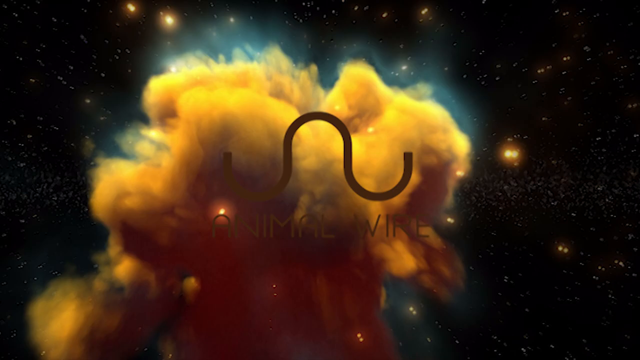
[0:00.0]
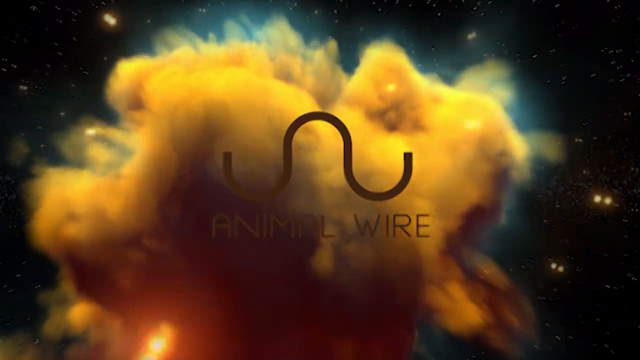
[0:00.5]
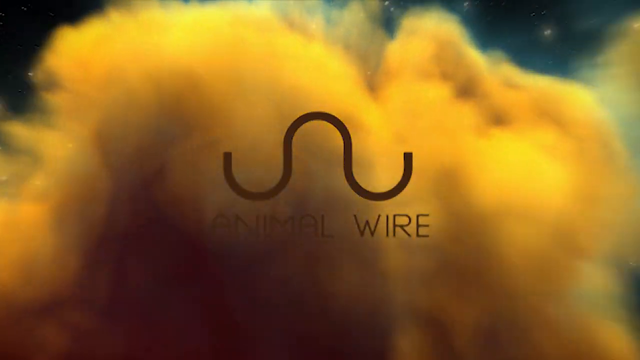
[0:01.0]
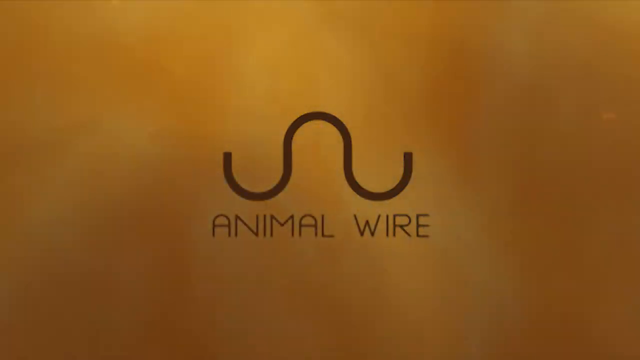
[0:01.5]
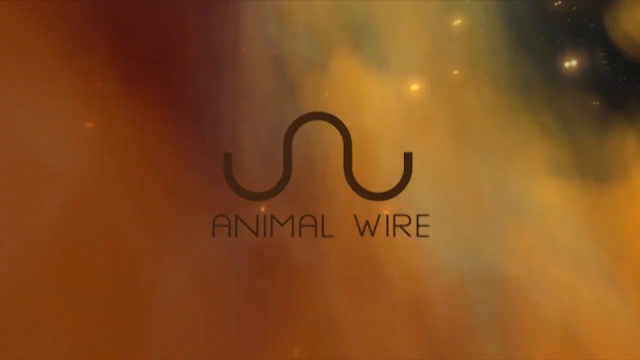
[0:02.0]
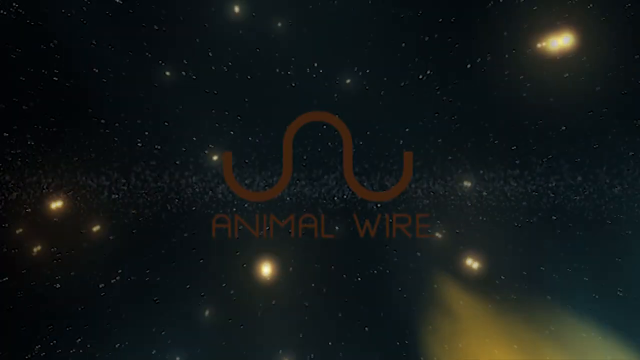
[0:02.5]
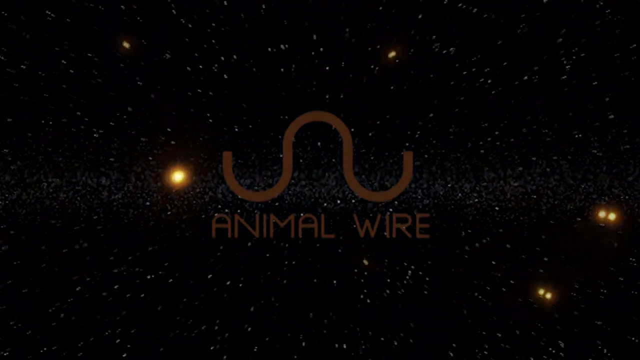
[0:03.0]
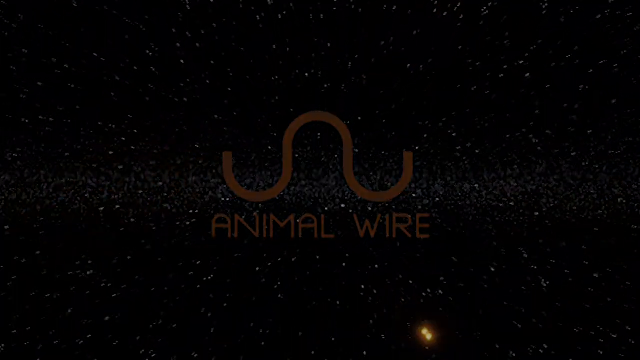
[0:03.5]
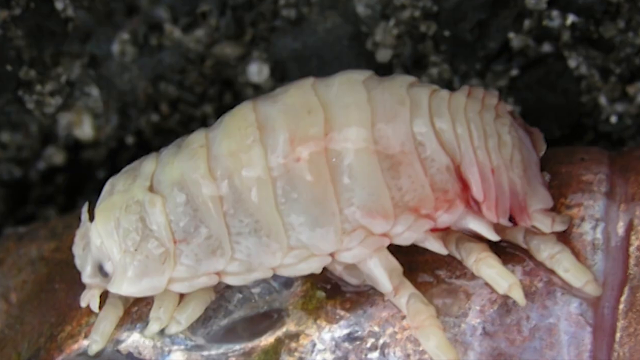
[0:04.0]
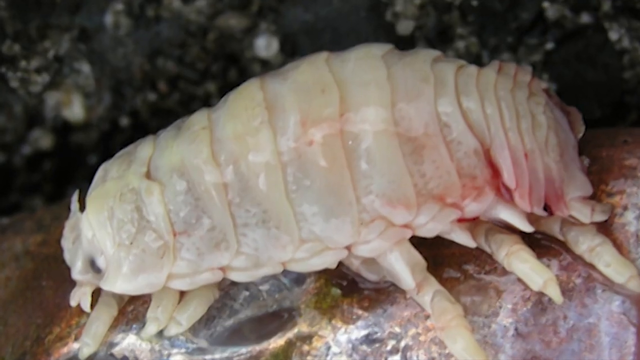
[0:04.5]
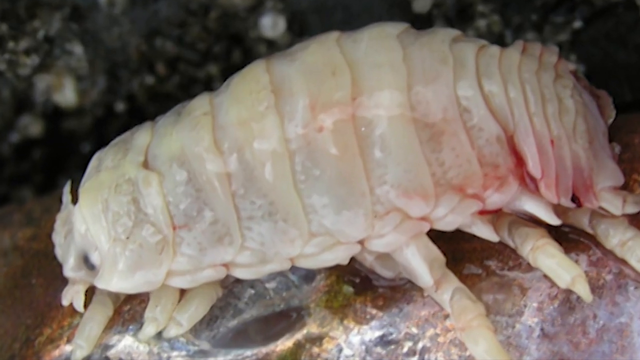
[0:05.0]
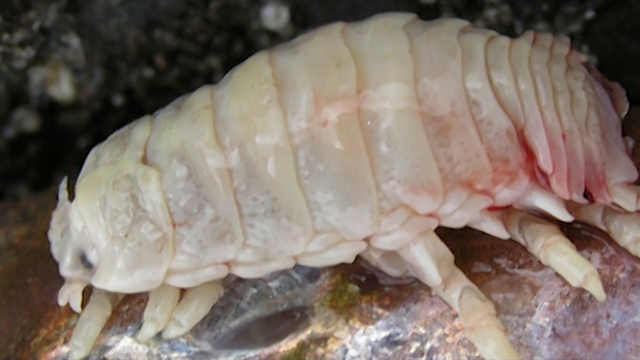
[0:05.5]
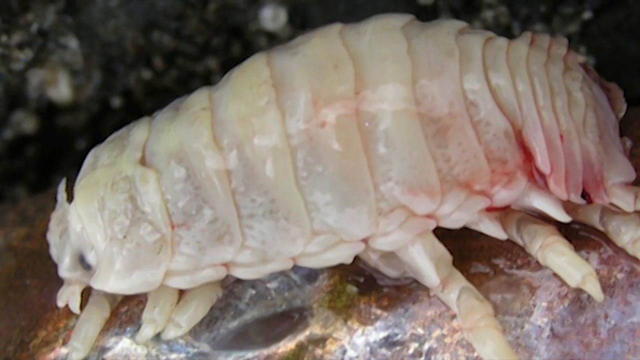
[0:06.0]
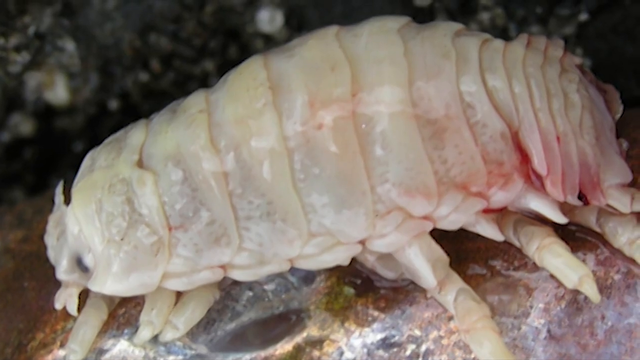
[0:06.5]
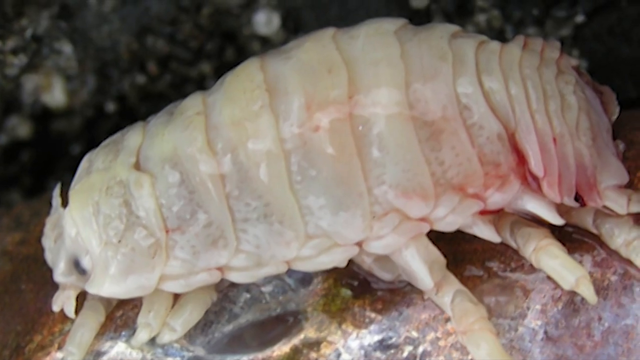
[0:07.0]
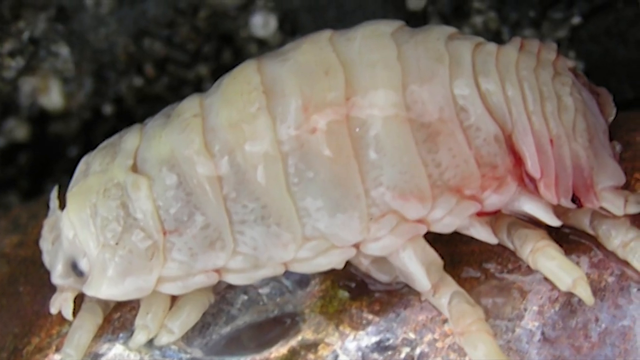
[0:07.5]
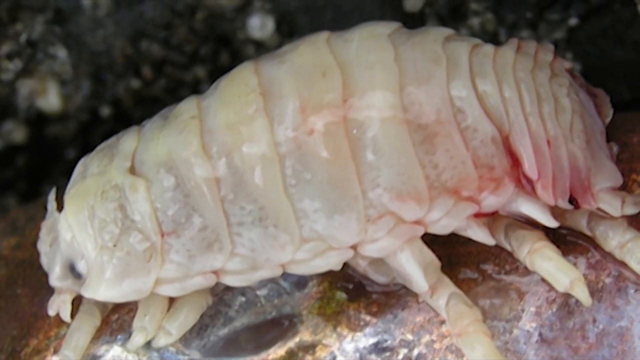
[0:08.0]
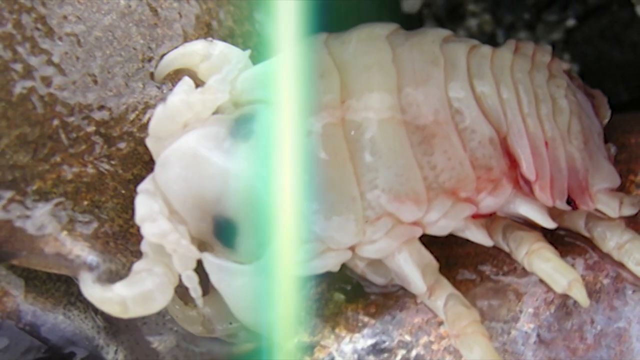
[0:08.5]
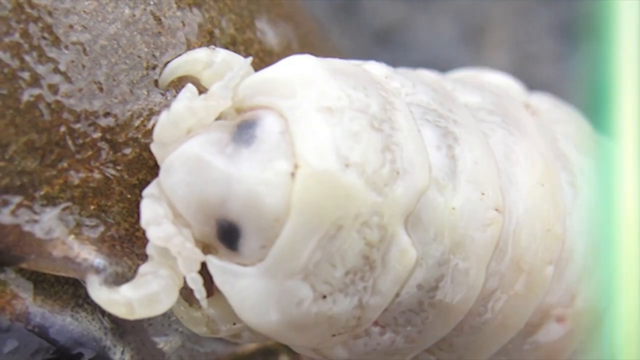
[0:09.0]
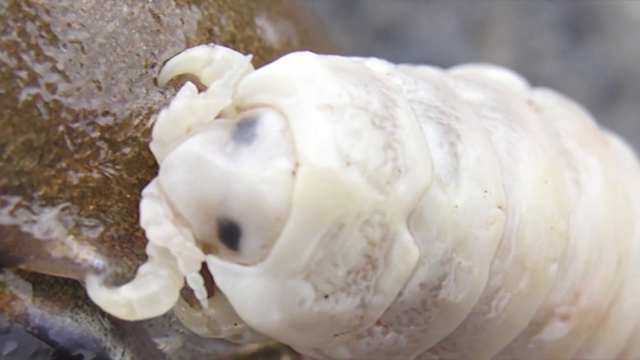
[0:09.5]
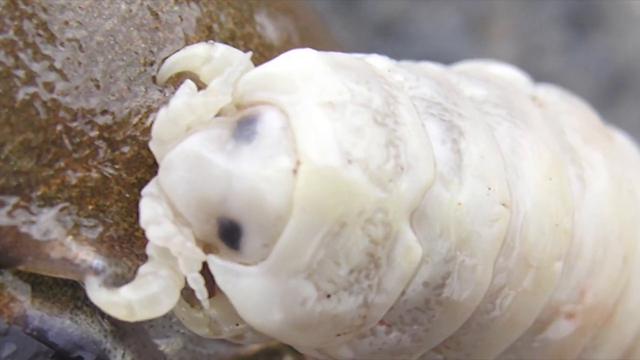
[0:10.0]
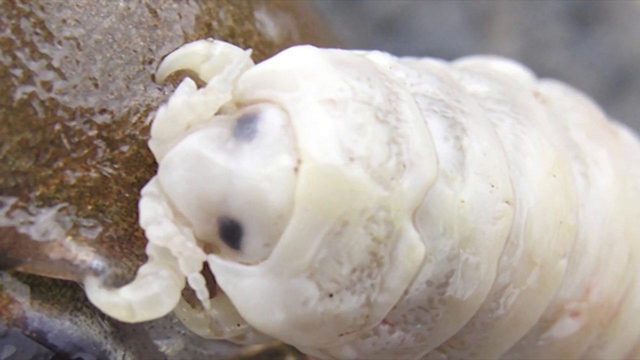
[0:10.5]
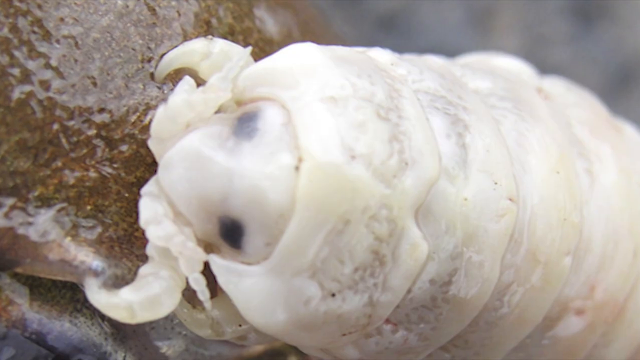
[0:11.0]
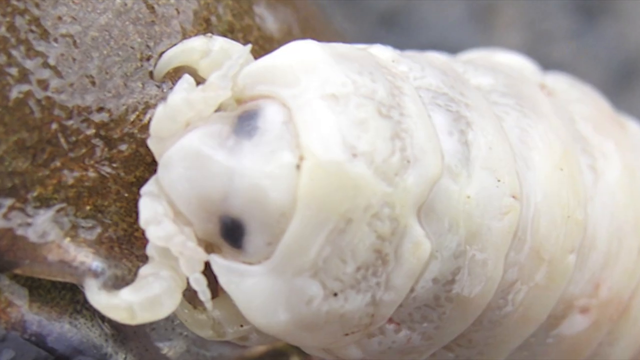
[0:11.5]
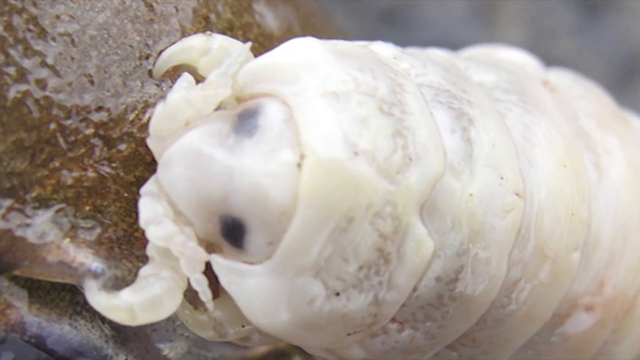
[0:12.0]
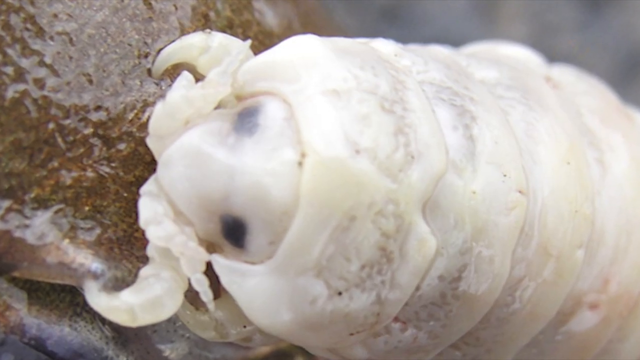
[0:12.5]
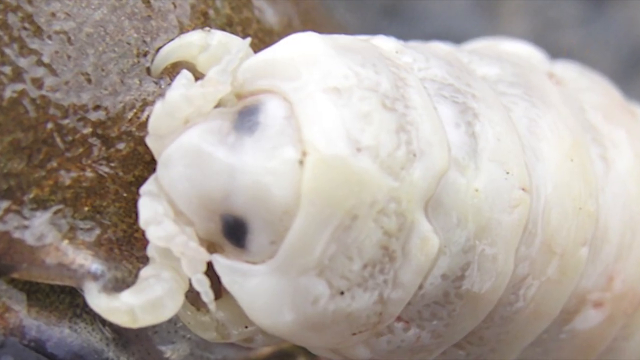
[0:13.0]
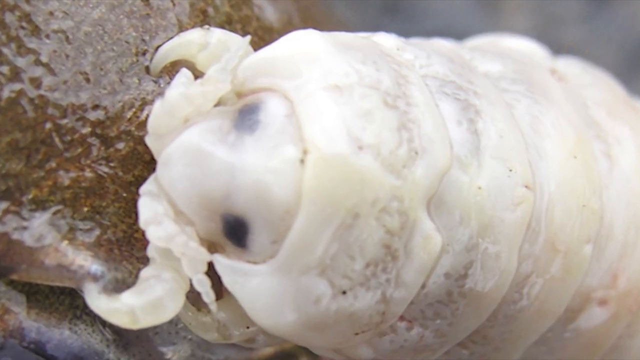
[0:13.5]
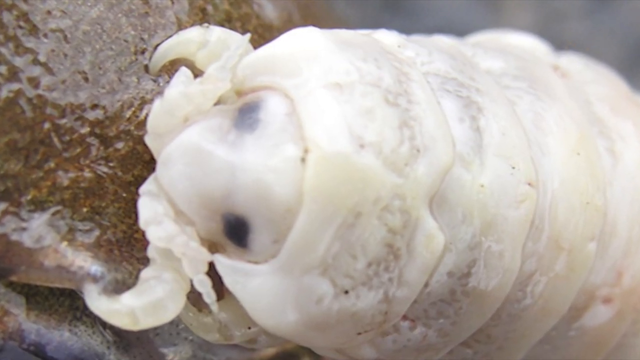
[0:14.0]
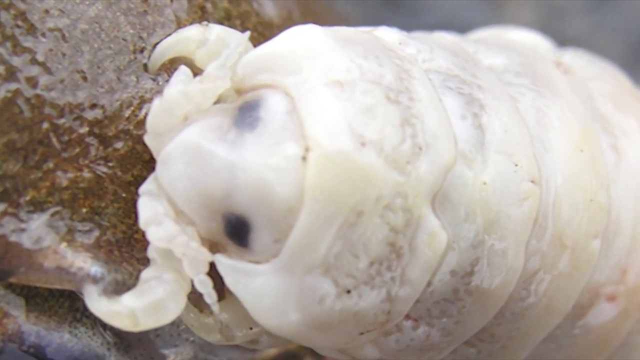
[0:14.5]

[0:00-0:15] A screen reads "animal wire" over a backdrop of outer space or some kind of nebulous yellow cloud that the view flies through. The animal wire logo is a curvy line that curves down twice and up once in the middle. The view then comes in close on a white creature that looks like a larva and possibly a mite; it is definitely a microscopic, close-up view of the creature, which is white, mite-like and very unappealing looking.